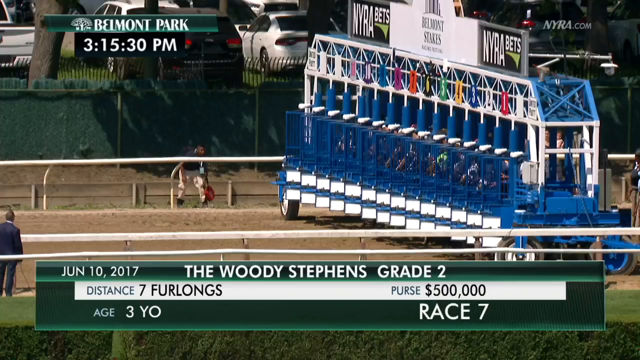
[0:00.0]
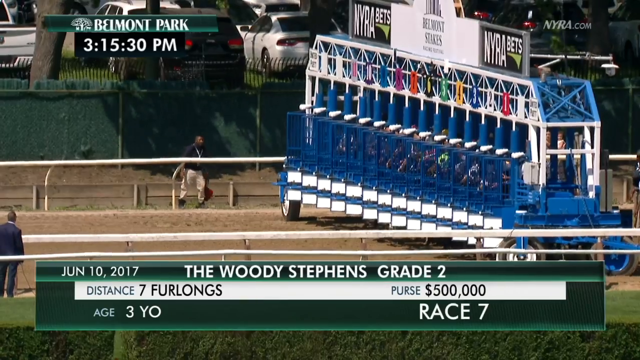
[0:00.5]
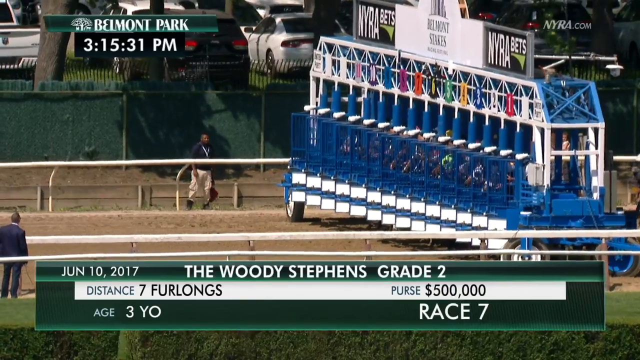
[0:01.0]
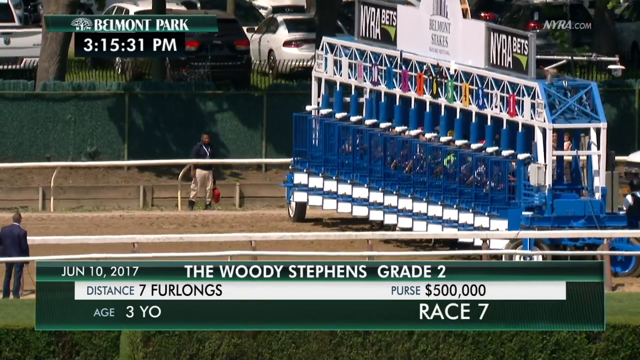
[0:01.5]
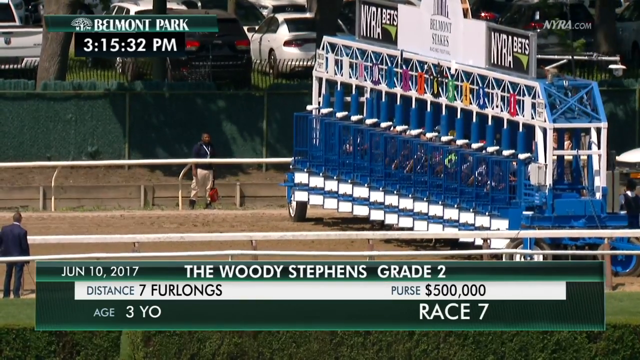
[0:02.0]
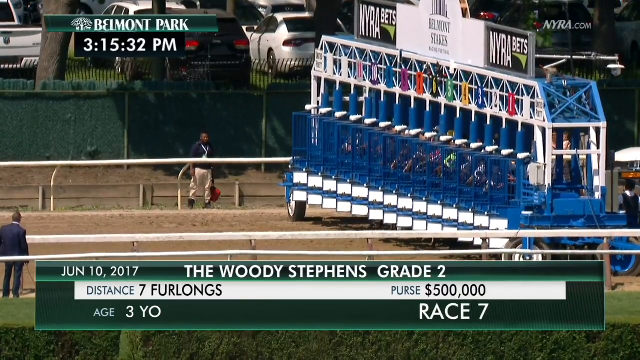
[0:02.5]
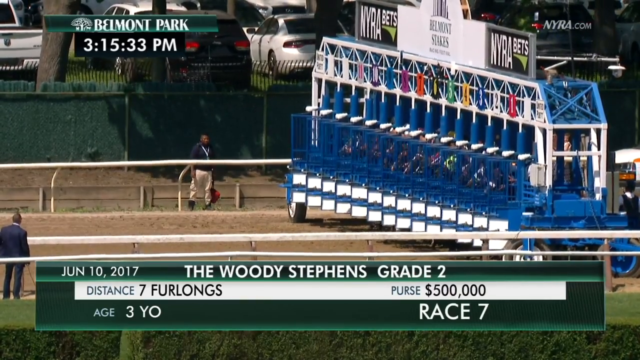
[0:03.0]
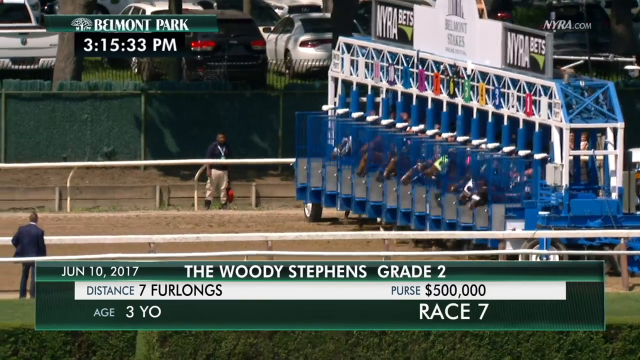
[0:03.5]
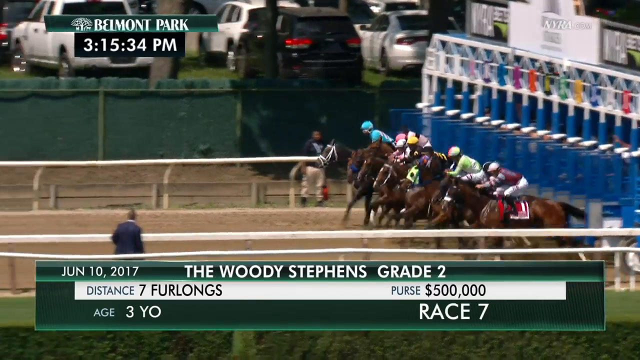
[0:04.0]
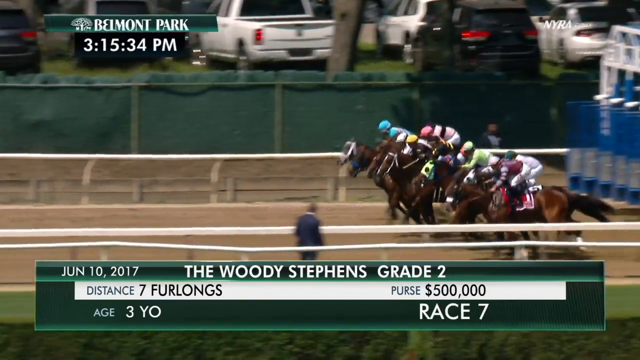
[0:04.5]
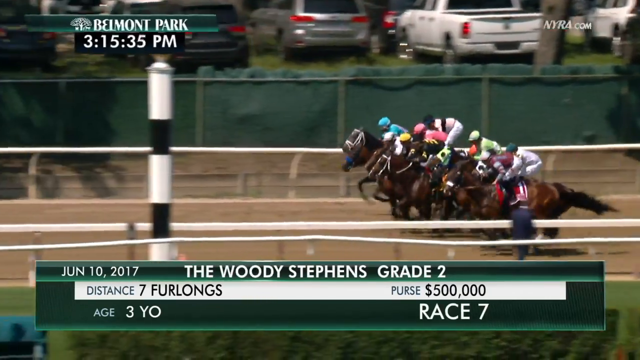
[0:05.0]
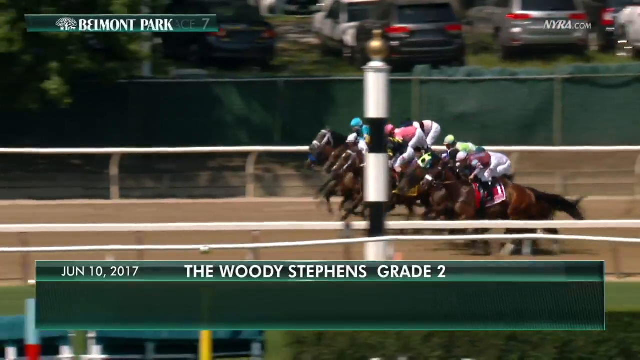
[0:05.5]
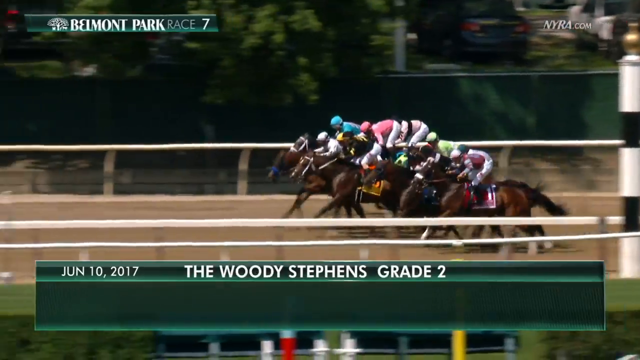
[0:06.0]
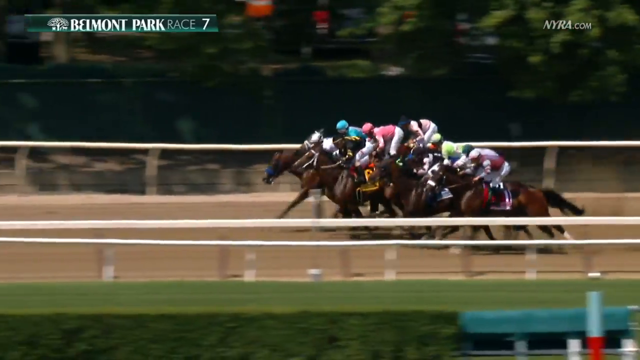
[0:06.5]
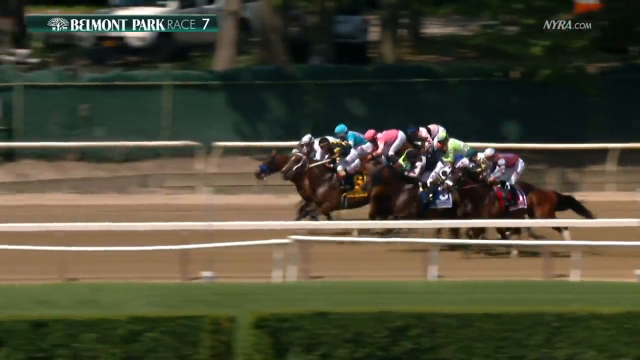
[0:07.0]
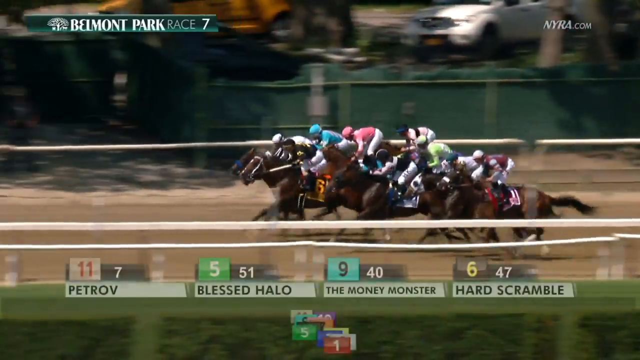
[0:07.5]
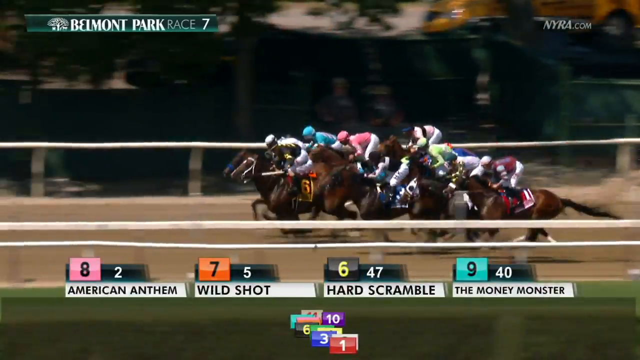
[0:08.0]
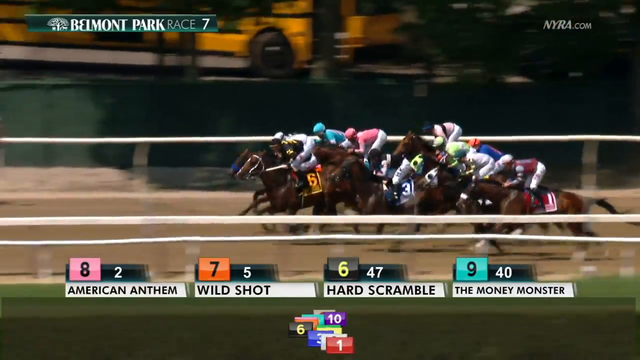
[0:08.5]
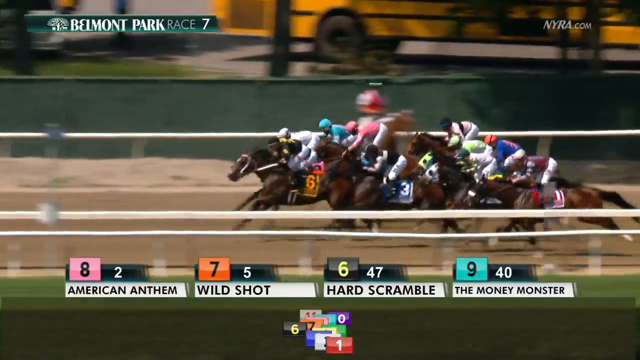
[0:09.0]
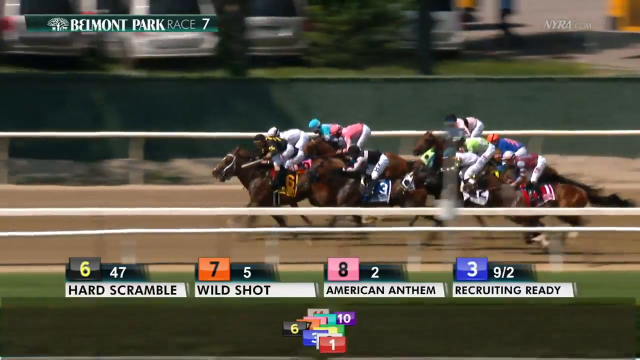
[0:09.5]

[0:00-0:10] The side of a dirt track is visible along with a side railing and a row of blue starting gates that have not opened yet; the gate is on wheels so it can be moved around. Text at the bottom reads "June 10, 2017" and "the Woody stephens Grade 2" in white on a green background, with a purse of "half a million" and a distance of "seven furlongs"; the current time, "315", appears at the top. The horses break out and all seem to be about the same distance, running neck and neck. Number six, which looks like Hard Scramble, is in first; its jockey wears a black shirt, and all the jockeys have white pants. On the far side is a parking lot behind a fence that looks black with many vertical posts. Closer to the dirt track there is a green fence, like chain-link, with some kind of green material over it.